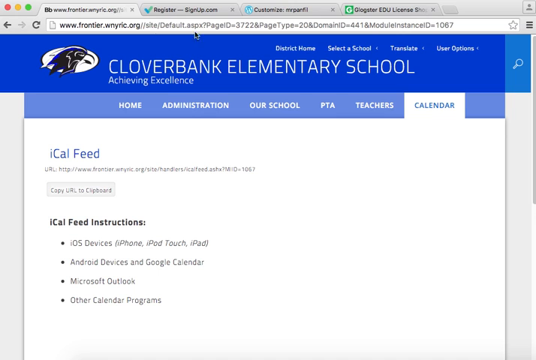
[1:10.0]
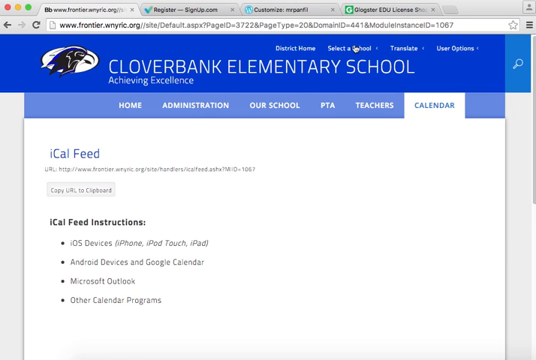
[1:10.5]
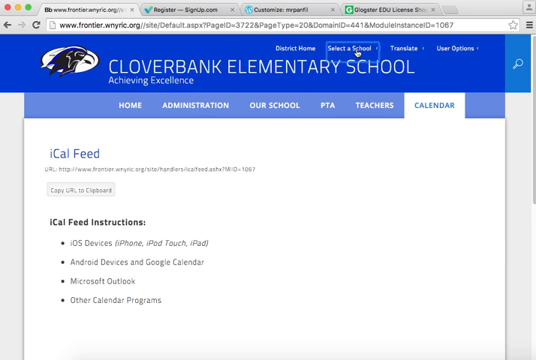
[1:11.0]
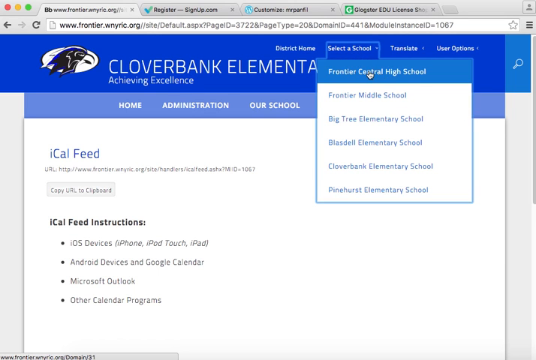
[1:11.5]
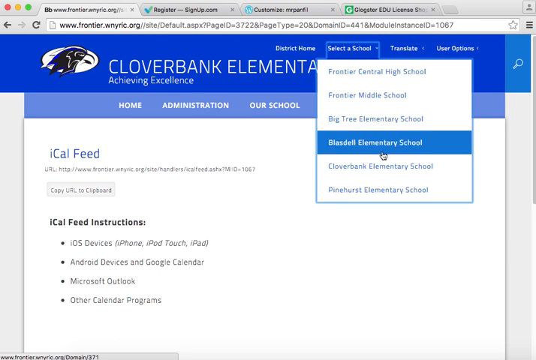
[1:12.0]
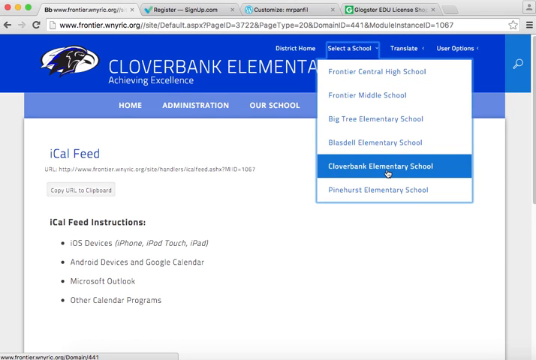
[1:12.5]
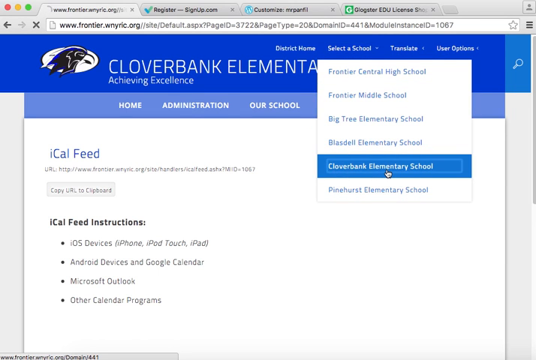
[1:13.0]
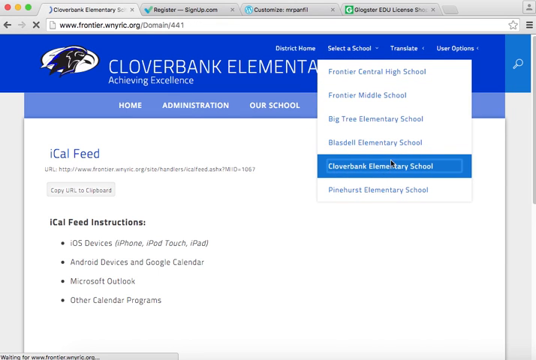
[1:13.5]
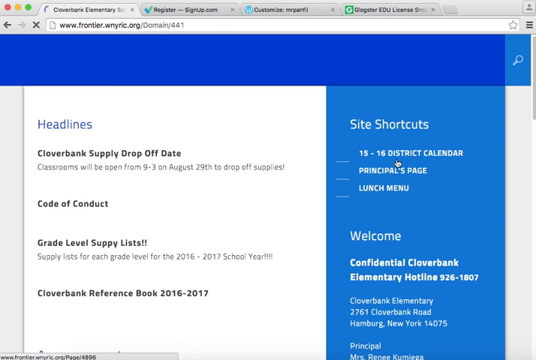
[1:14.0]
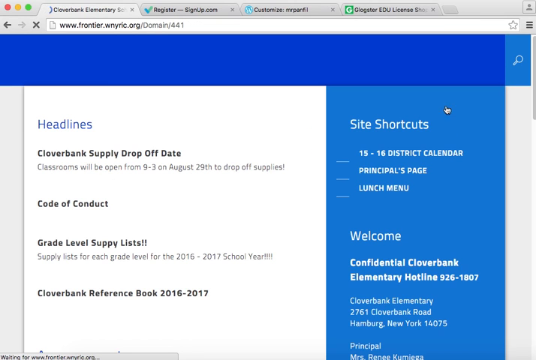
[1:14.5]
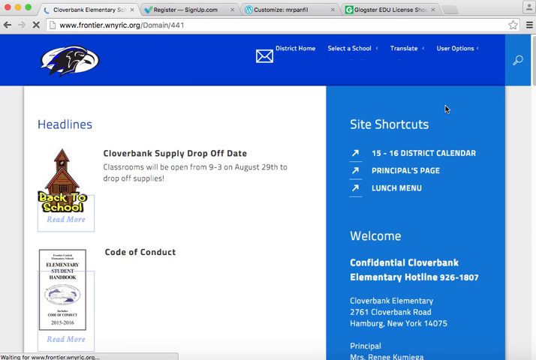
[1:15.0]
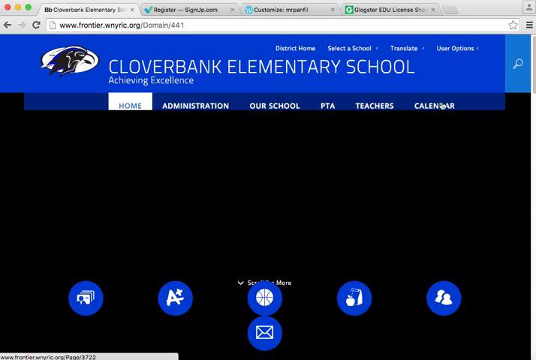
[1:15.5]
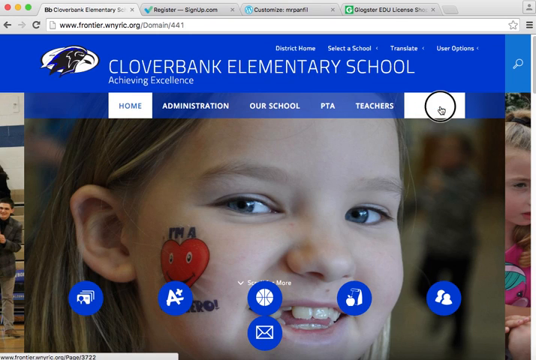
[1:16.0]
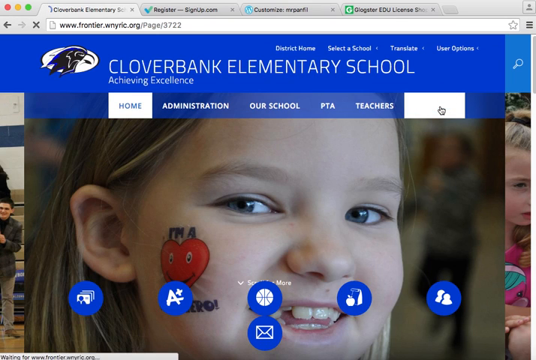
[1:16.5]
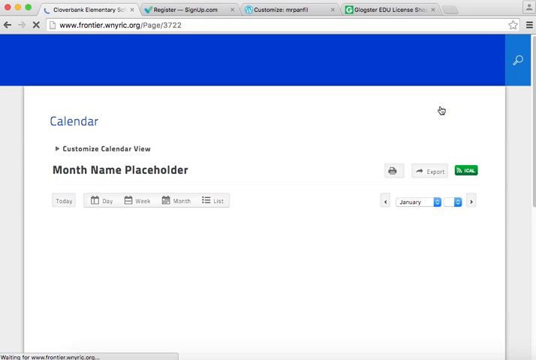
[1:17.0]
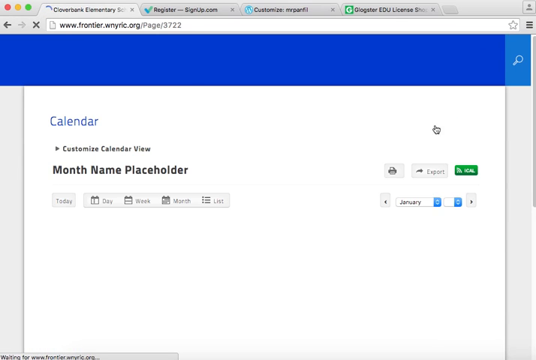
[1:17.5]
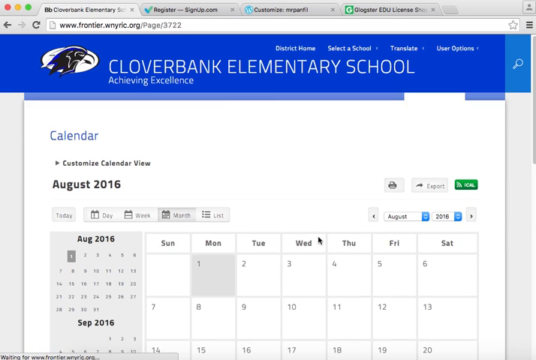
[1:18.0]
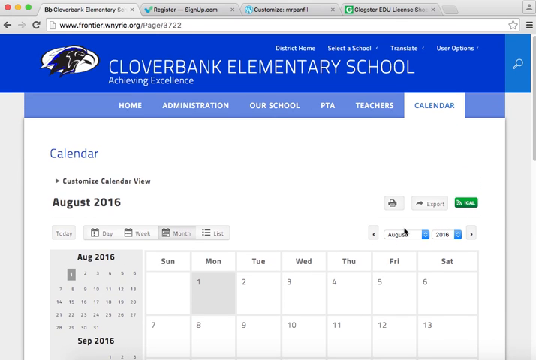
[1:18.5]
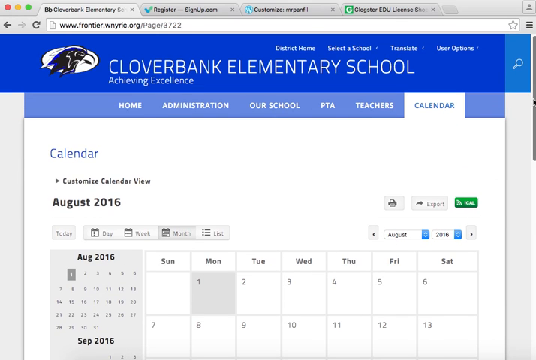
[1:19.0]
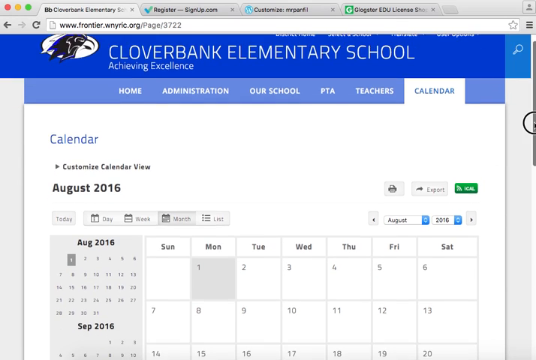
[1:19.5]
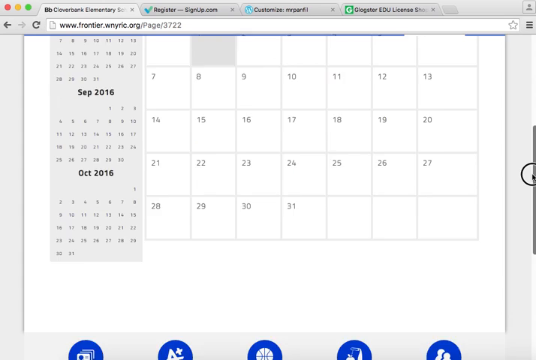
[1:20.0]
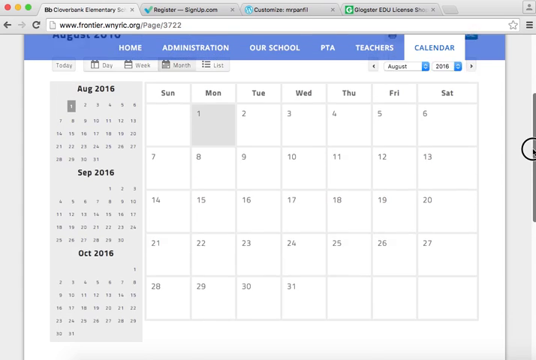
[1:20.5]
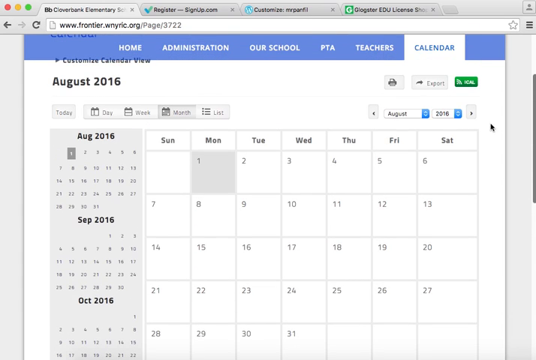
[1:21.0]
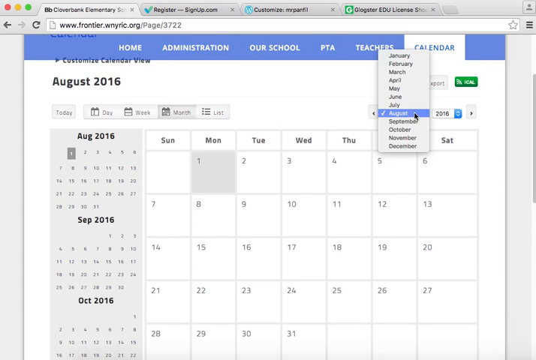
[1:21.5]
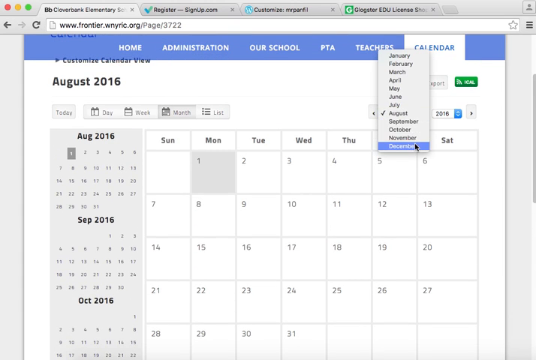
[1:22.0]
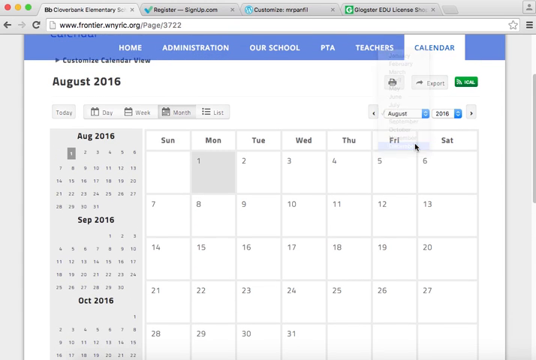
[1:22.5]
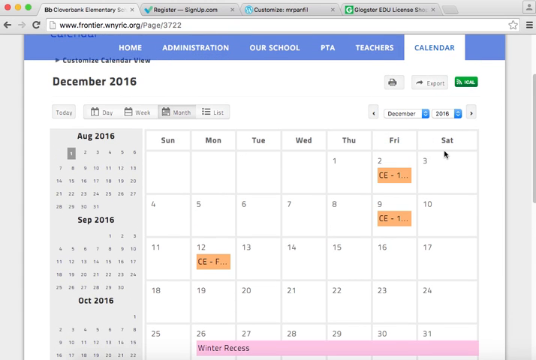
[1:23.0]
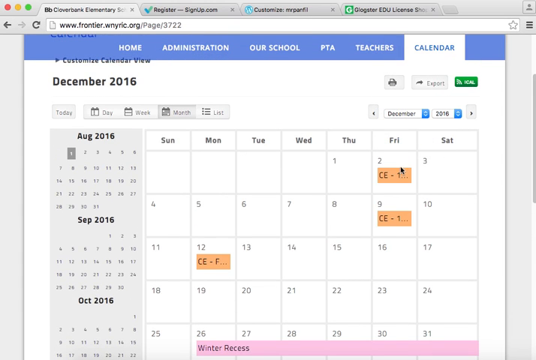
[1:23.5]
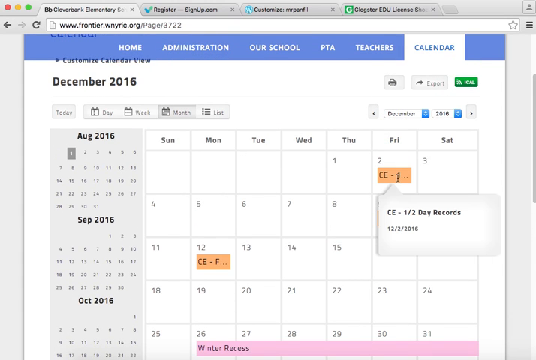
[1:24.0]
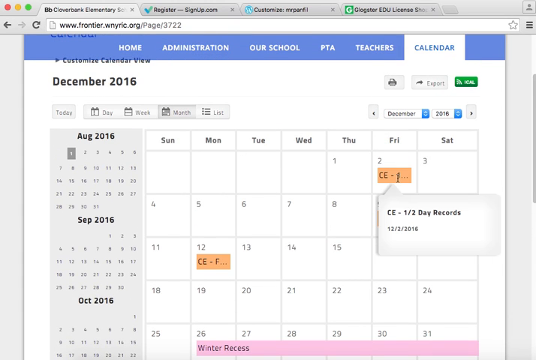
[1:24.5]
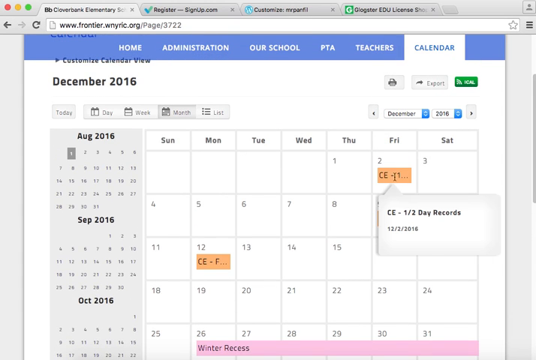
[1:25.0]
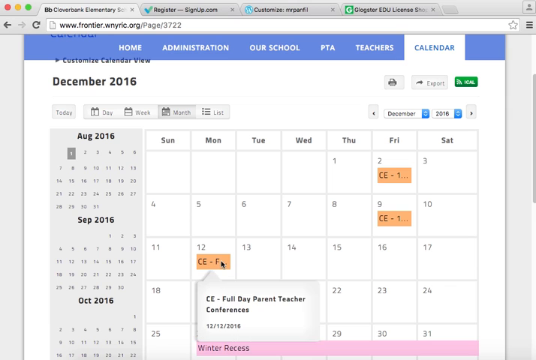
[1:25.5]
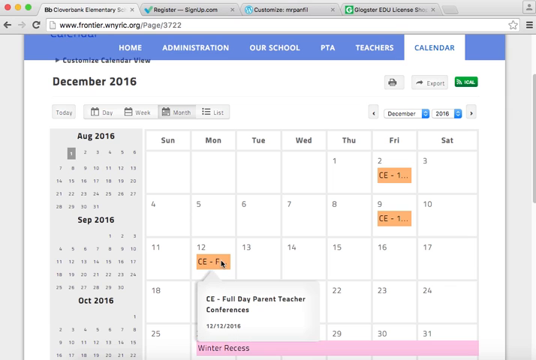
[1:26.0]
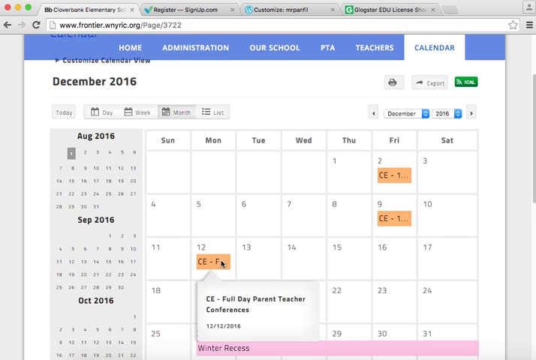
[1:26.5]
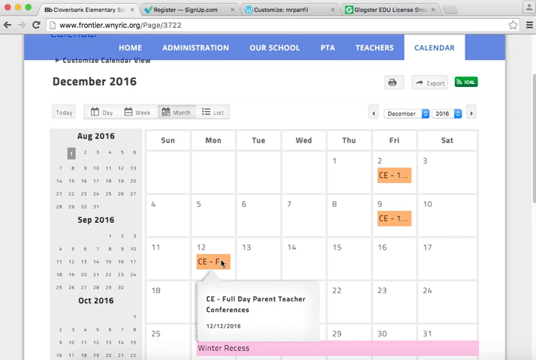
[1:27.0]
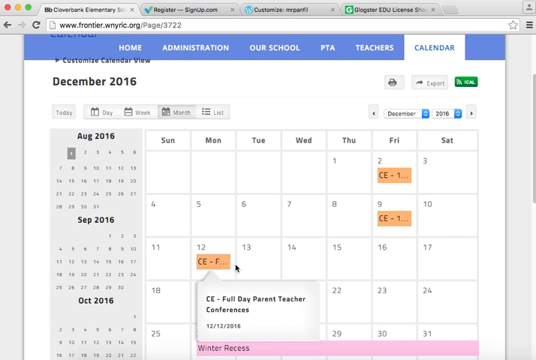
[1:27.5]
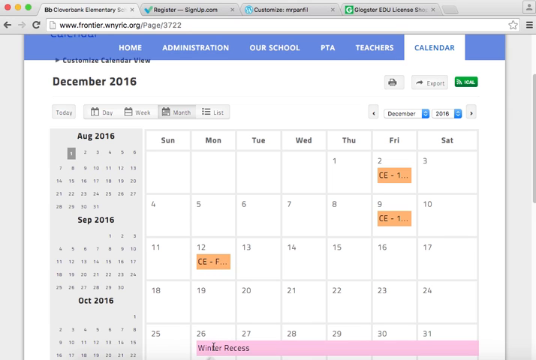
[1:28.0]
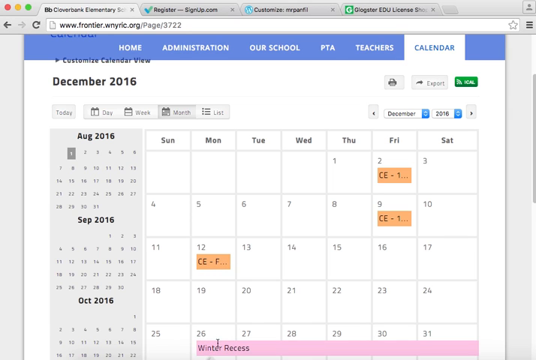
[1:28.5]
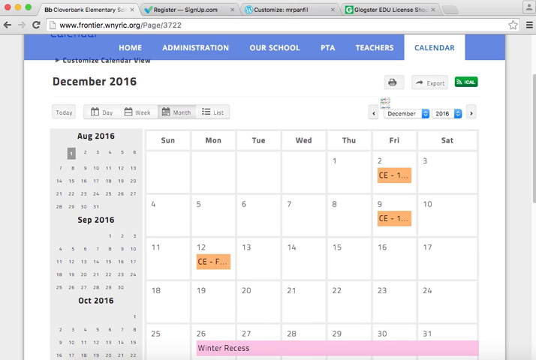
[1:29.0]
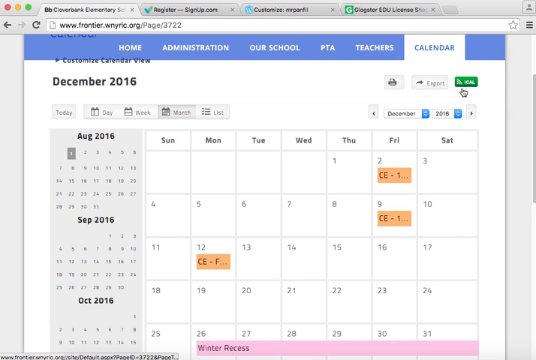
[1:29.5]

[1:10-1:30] In the first browser tab is a school website. At the very top, the user selects the navigation "Select a School" and chooses Cloverbank Elementary School, which was already being displayed. Once it loads, they click on Calendar in the top navigation, apparently to look at some calendar events. At the top right is a button that pulls down a dropdown with all the months; they click the dropdown and select December. The December month loads with a few dates highlighted in brown. The user hovers over the brown dates, seemingly checking that the dates make sense and that the calendar page displays well.